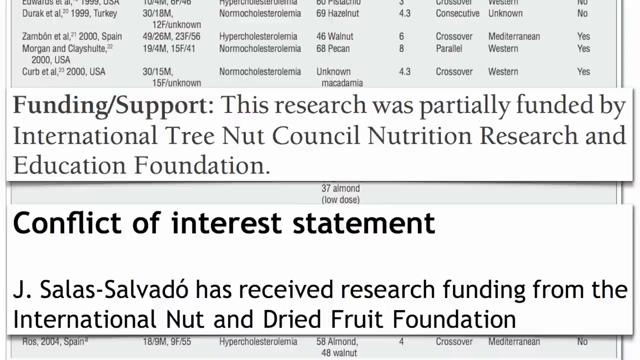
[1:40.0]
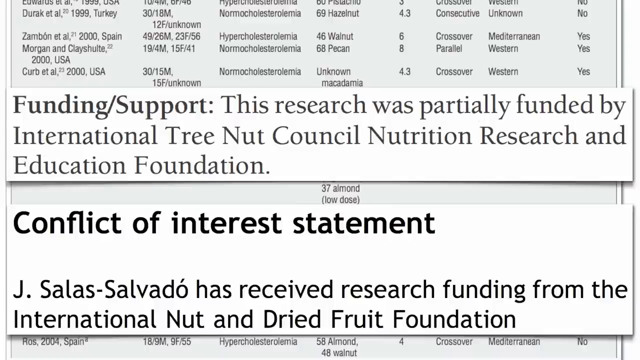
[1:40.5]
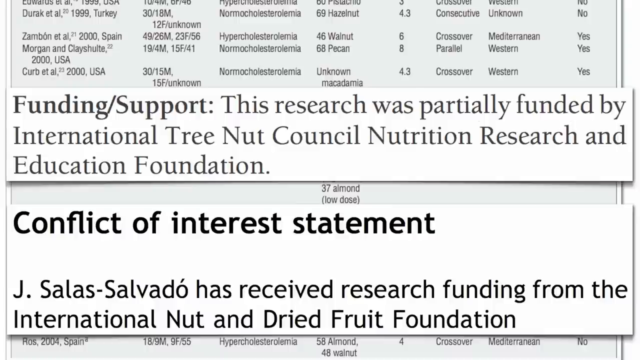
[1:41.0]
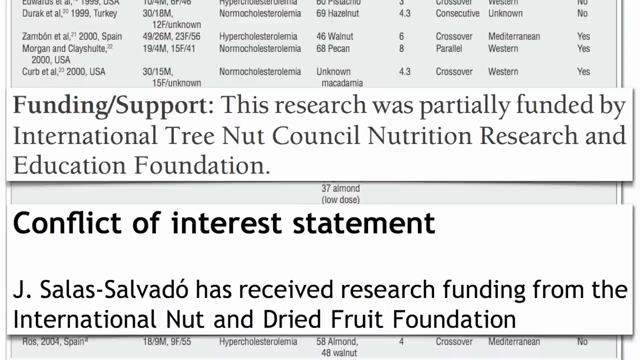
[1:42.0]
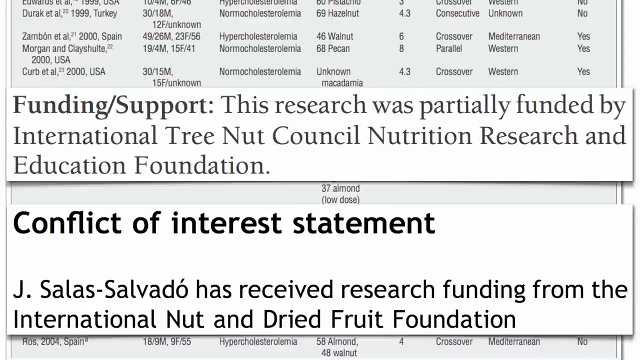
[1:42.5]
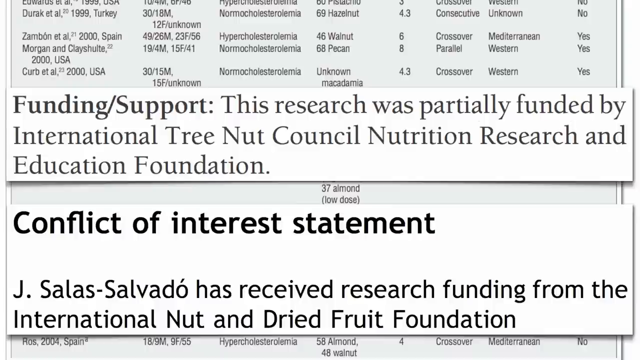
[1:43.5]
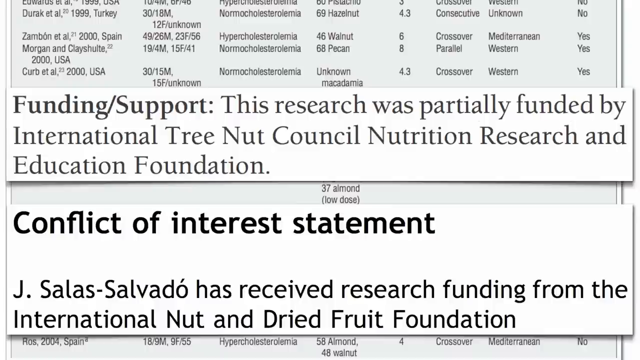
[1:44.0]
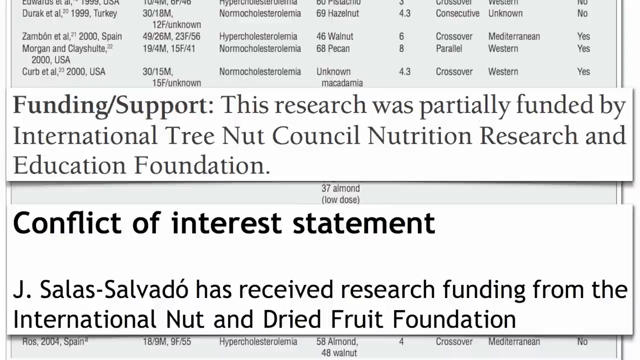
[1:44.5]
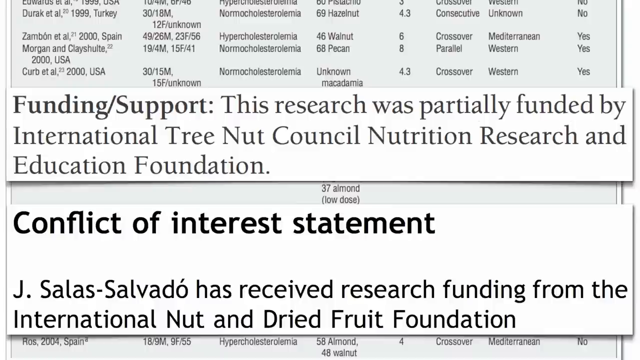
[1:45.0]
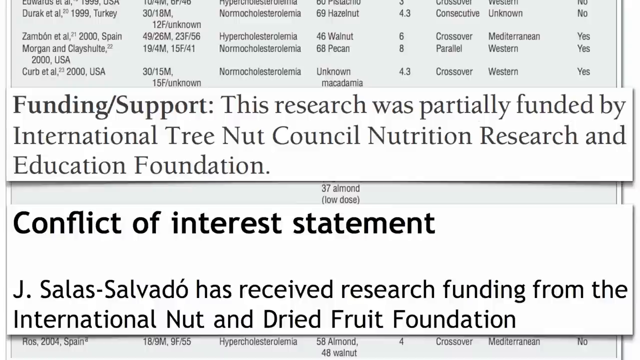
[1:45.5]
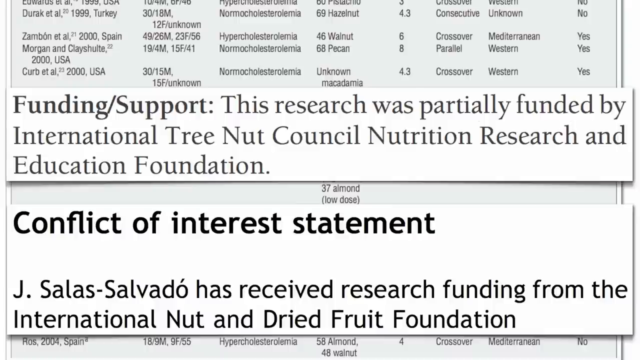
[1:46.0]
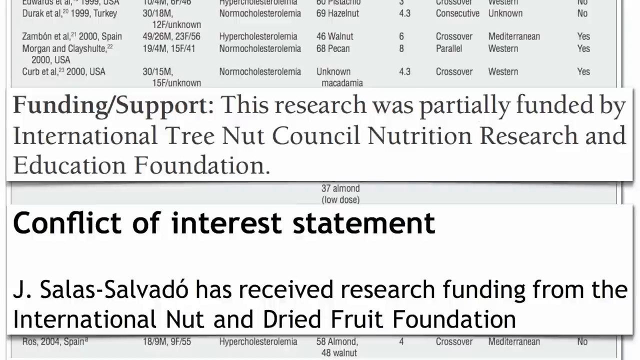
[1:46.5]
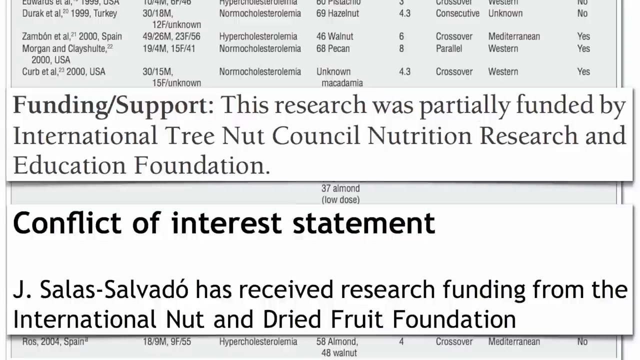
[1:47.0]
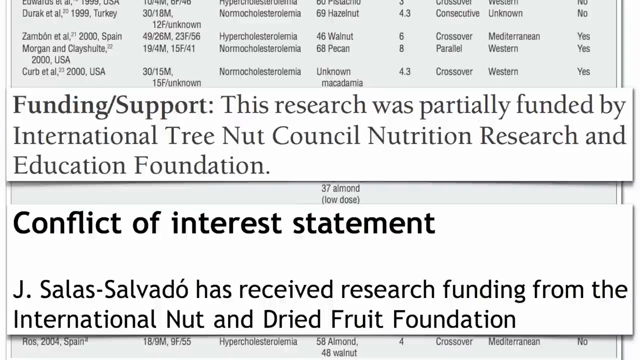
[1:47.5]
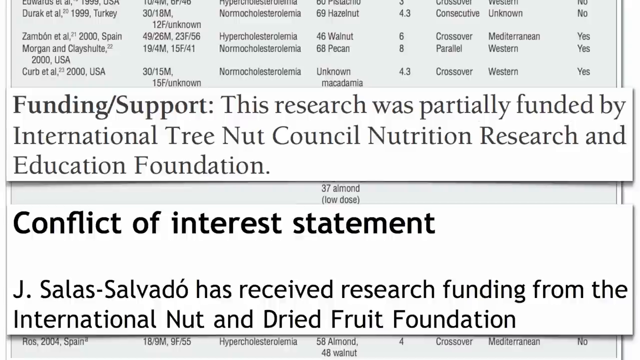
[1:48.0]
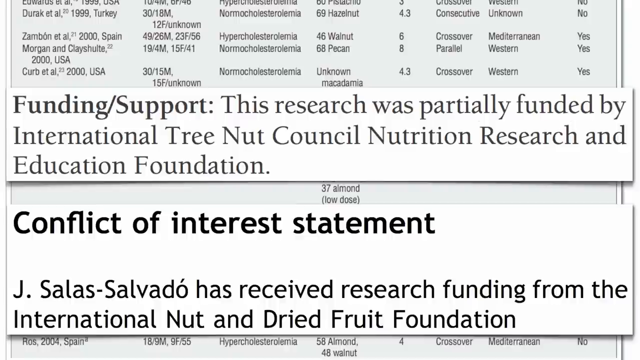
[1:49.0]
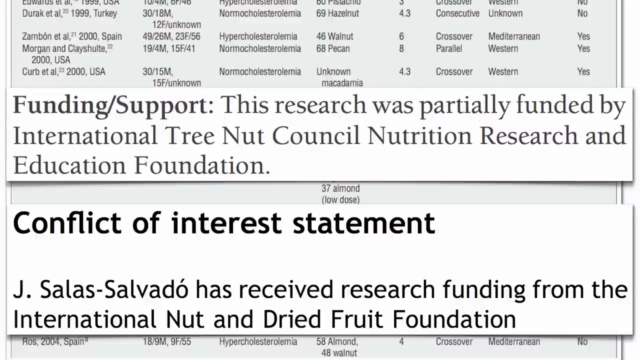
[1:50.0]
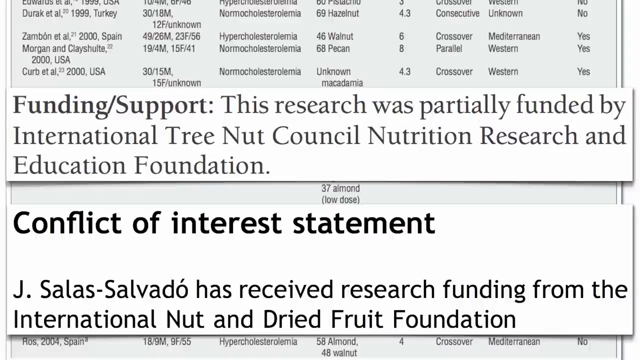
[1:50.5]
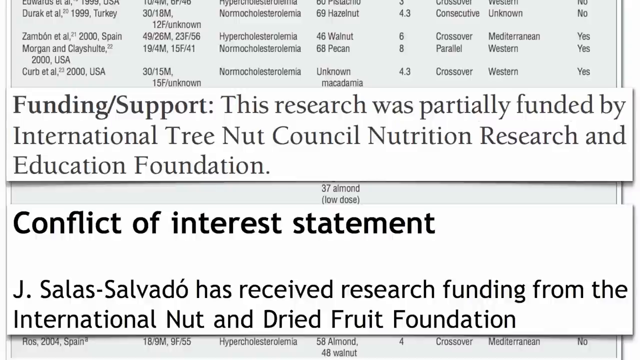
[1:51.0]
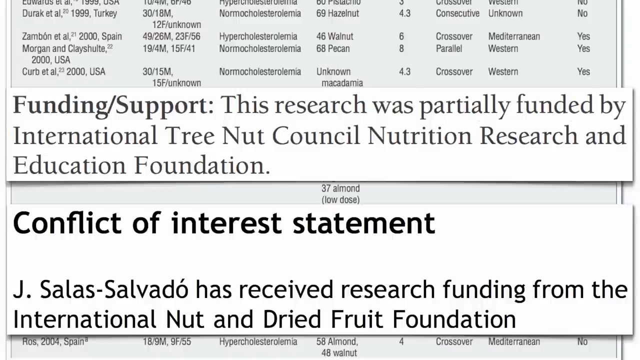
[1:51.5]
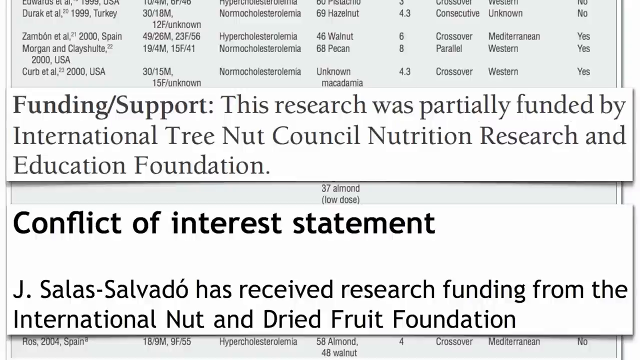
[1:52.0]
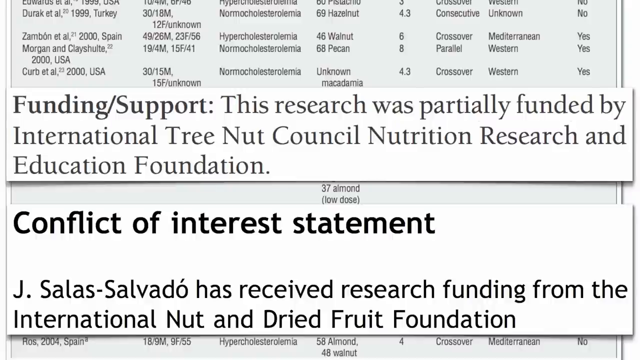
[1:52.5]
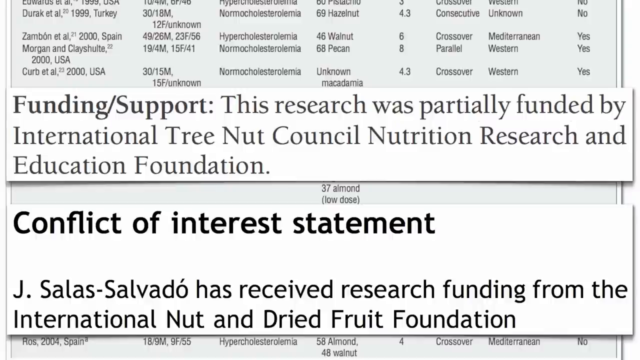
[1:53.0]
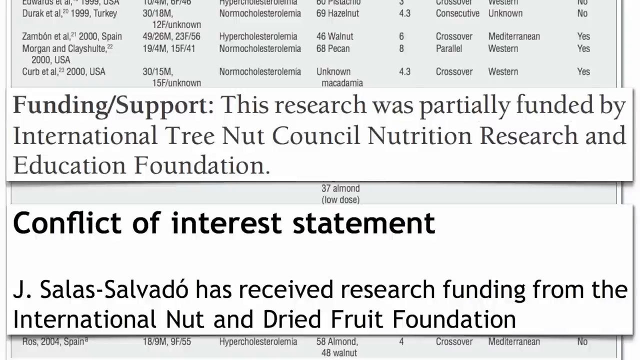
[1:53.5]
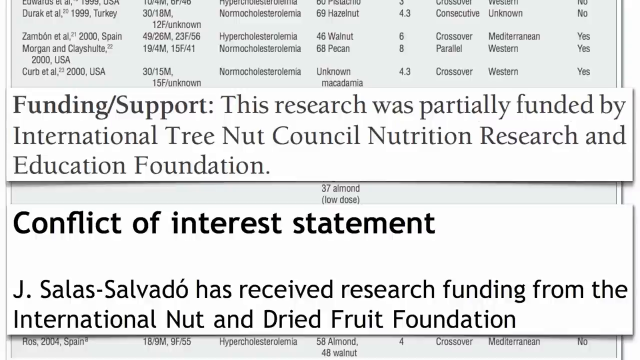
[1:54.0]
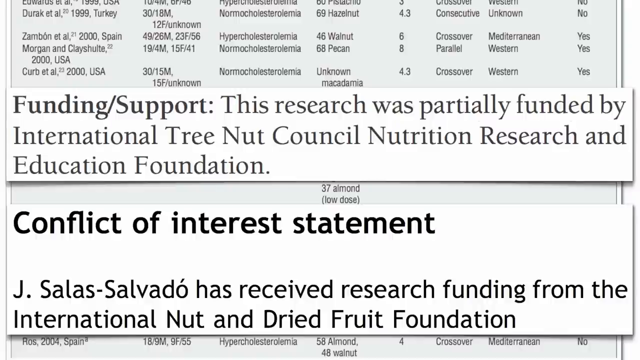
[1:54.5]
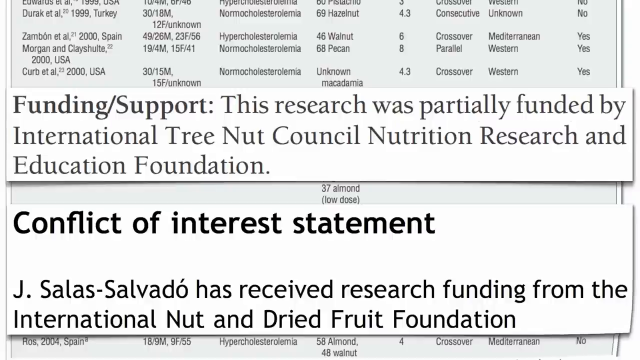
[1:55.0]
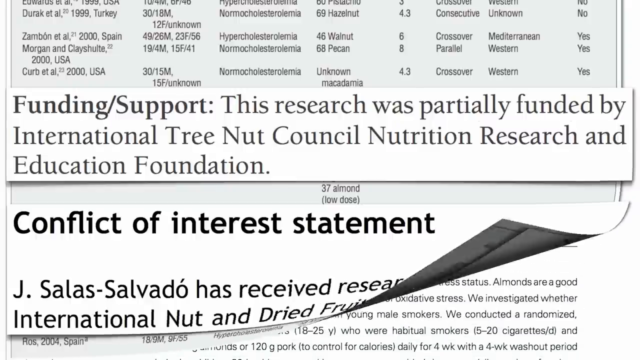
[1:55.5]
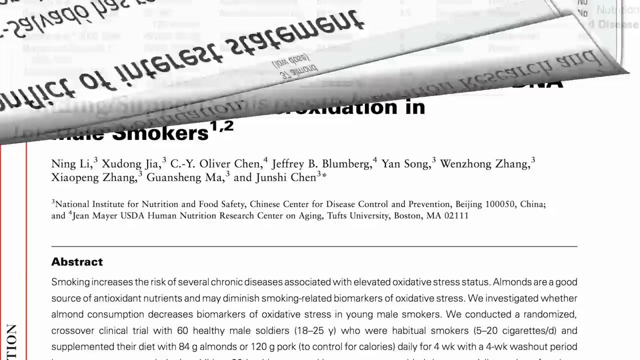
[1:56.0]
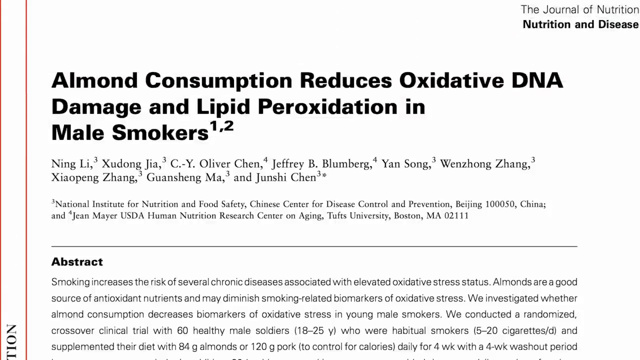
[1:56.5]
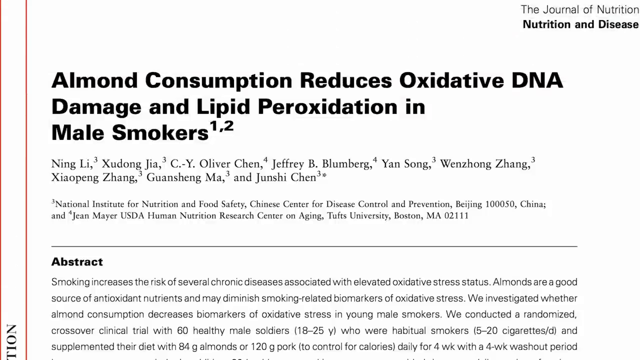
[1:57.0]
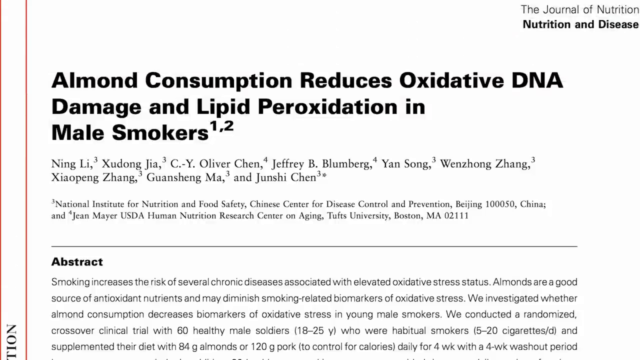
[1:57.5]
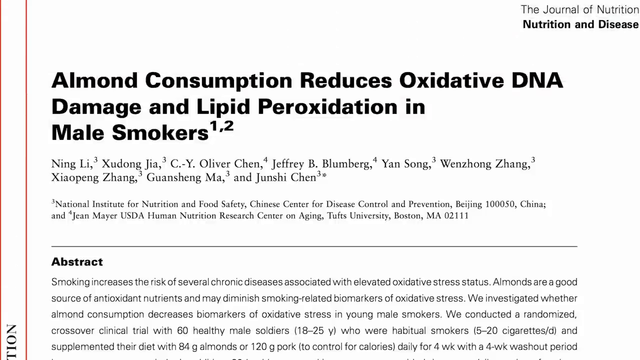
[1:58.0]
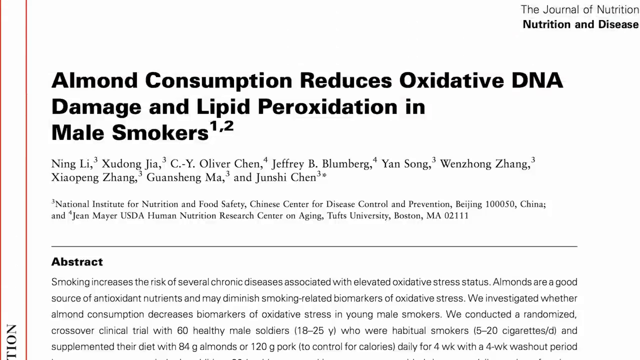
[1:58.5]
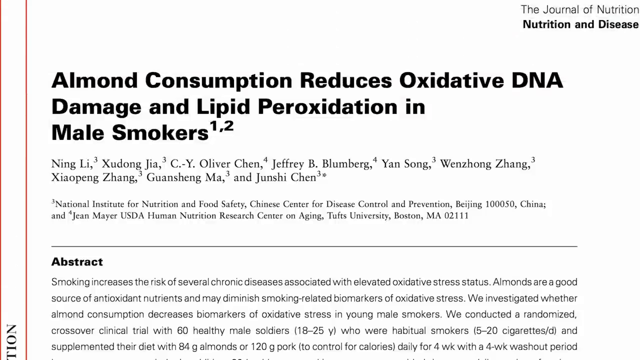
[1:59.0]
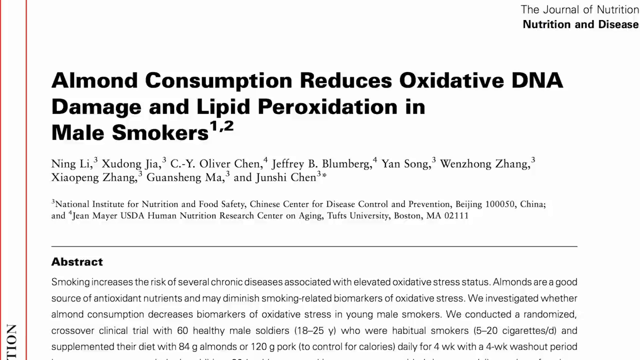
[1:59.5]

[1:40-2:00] The two banners remain across the nut information: the funding/support banner stating that the research was partially funded by an international tree nut council, nutrition research and education foundation, and the conflict of interest statement saying that Jay Salas Salvador has received research funding from the international nut and dried fruit foundation. The video stays on this information for most of the shot, then changes to a new page. At the top right it says "the Journal of Nutrition, Nutrition and Disease." A bold headline reads "almond consumption reduces oxidative DNA damage and lipid peroxidation in male smokers," with multiple names and multiple citations underneath. A long black line separates the article, with "abstract" underneath it, and the article itself follows but is cut off at the bottom.